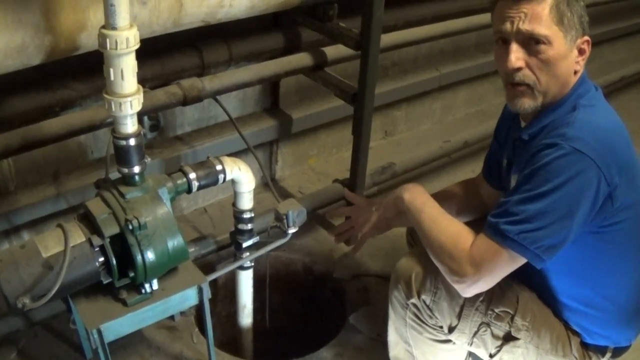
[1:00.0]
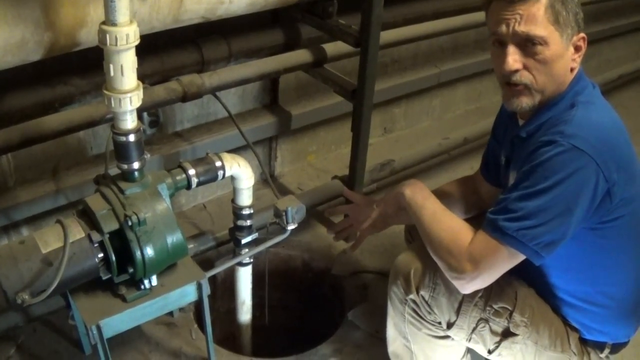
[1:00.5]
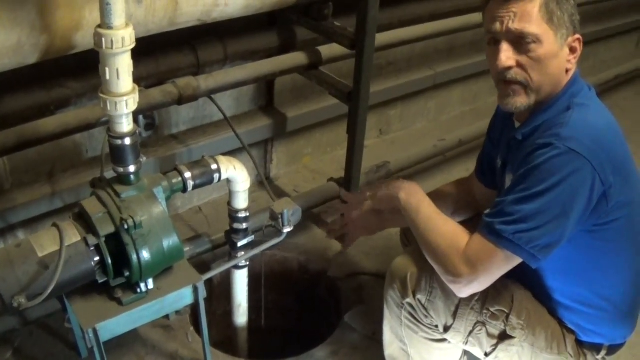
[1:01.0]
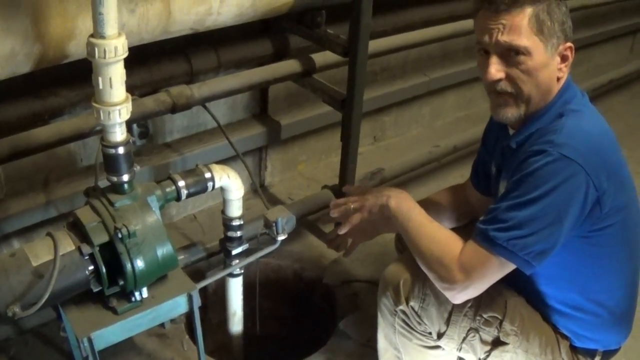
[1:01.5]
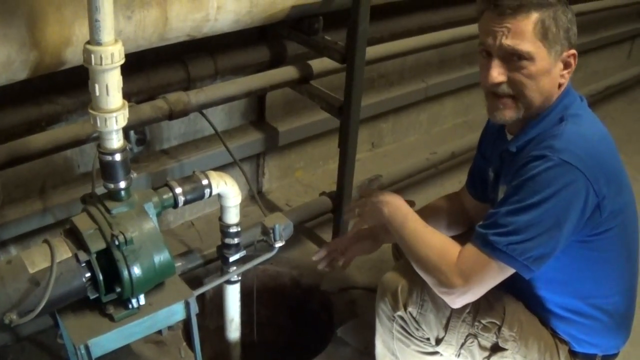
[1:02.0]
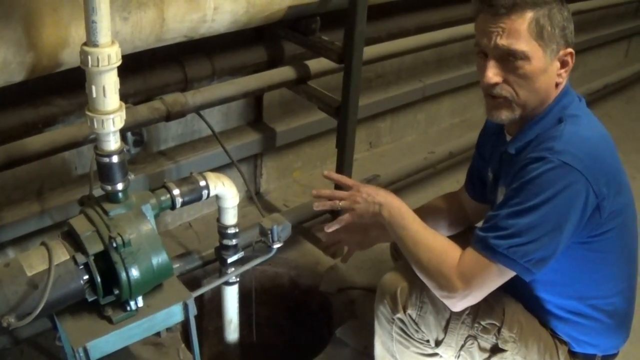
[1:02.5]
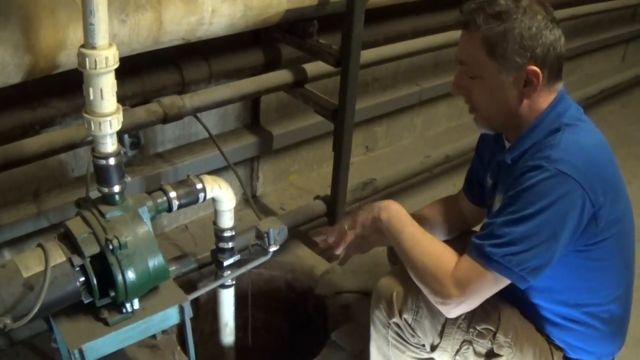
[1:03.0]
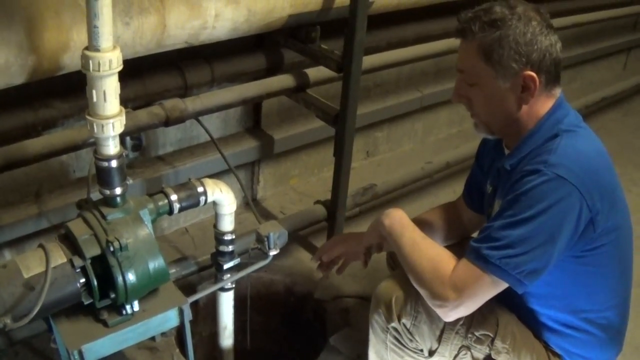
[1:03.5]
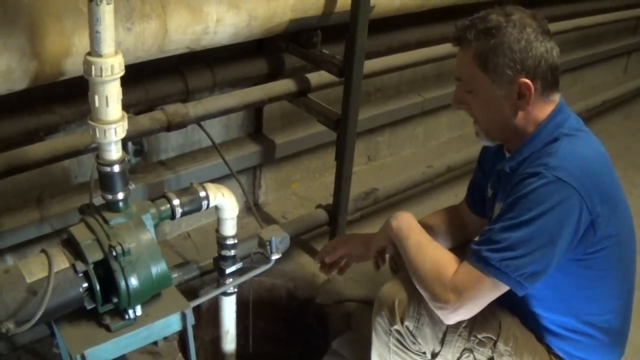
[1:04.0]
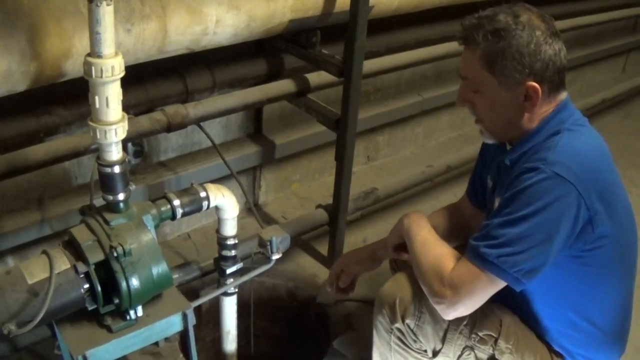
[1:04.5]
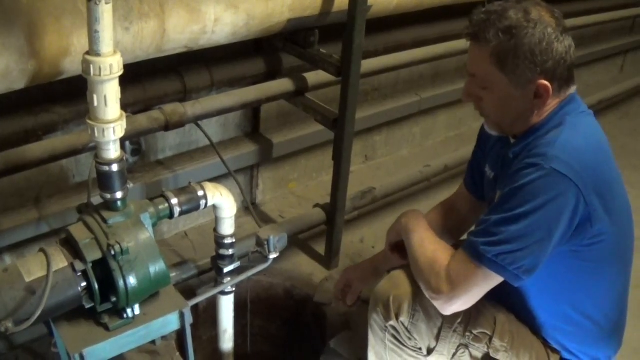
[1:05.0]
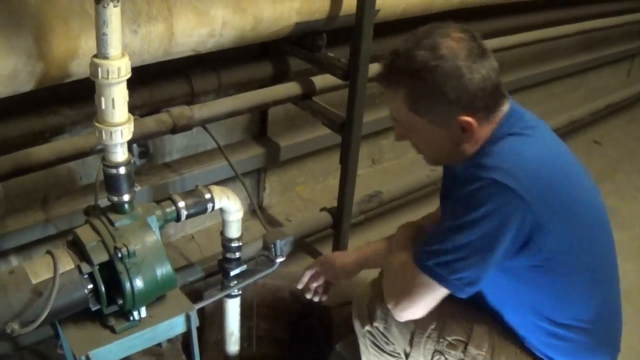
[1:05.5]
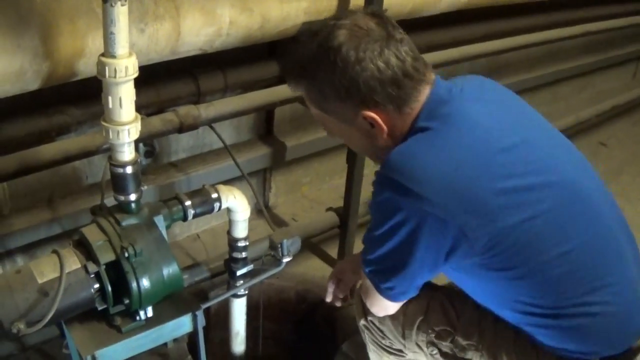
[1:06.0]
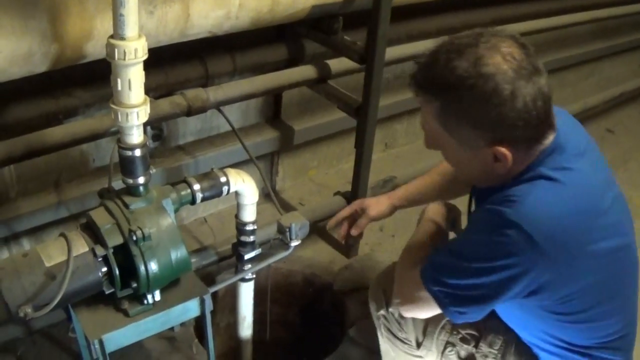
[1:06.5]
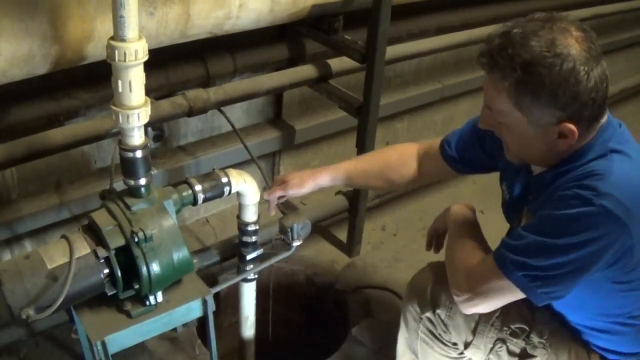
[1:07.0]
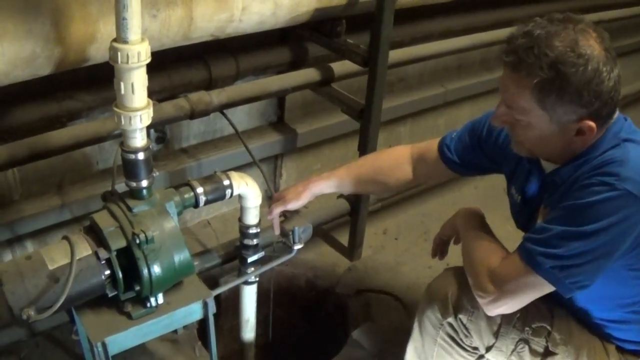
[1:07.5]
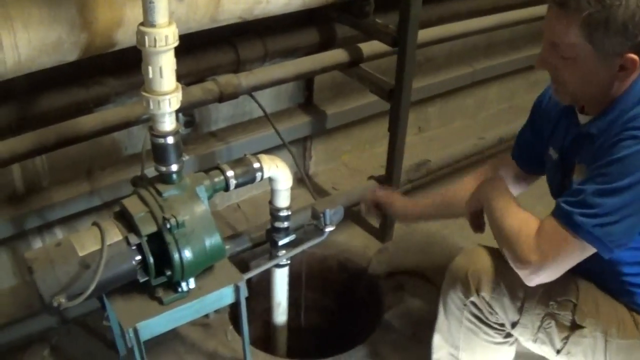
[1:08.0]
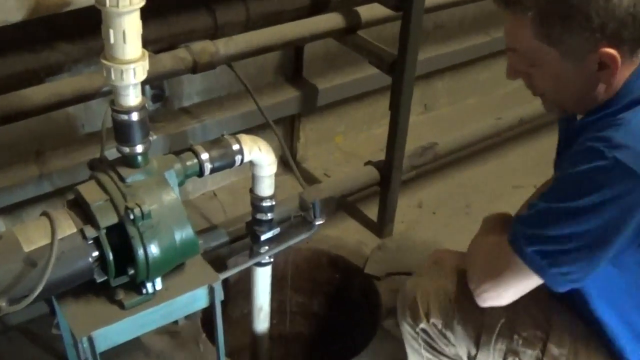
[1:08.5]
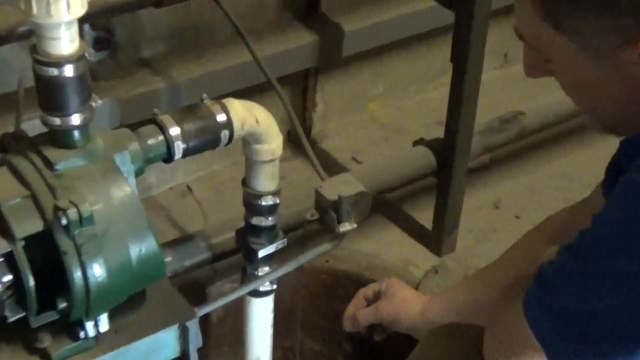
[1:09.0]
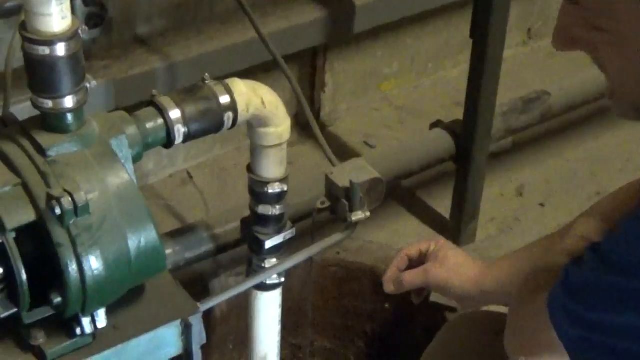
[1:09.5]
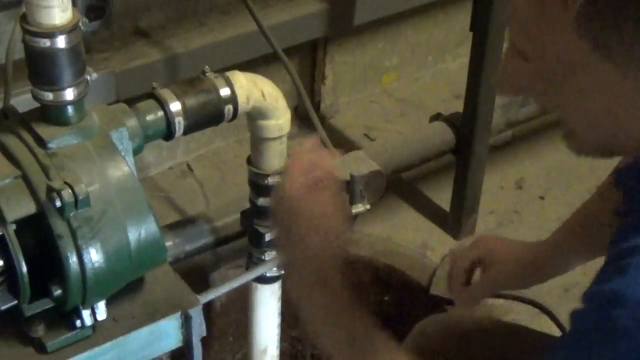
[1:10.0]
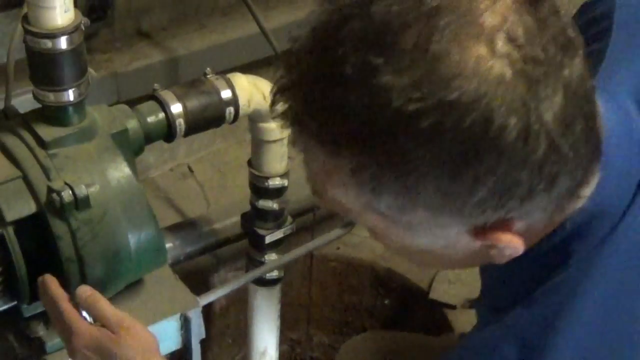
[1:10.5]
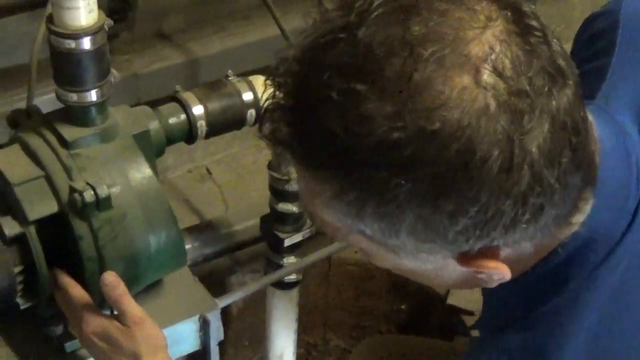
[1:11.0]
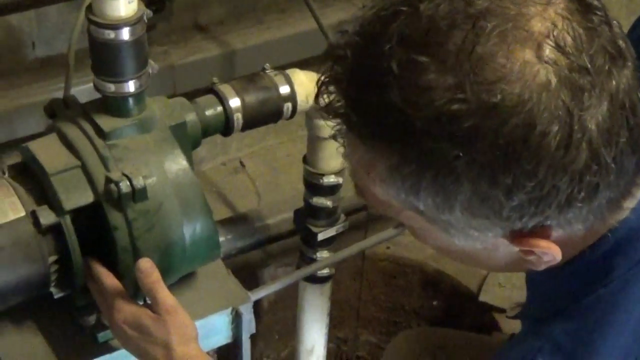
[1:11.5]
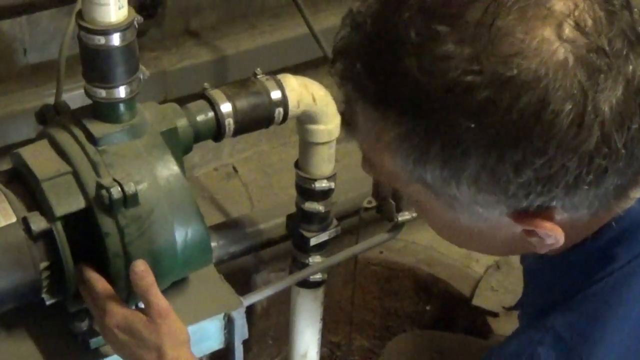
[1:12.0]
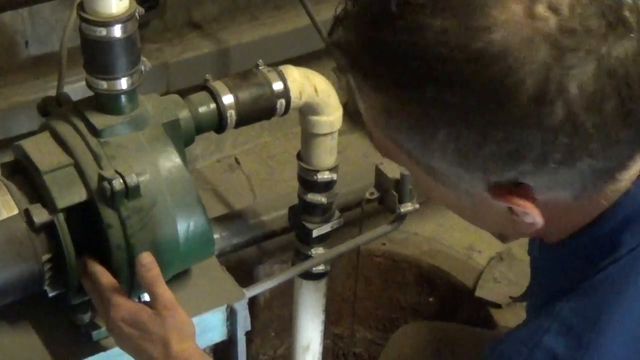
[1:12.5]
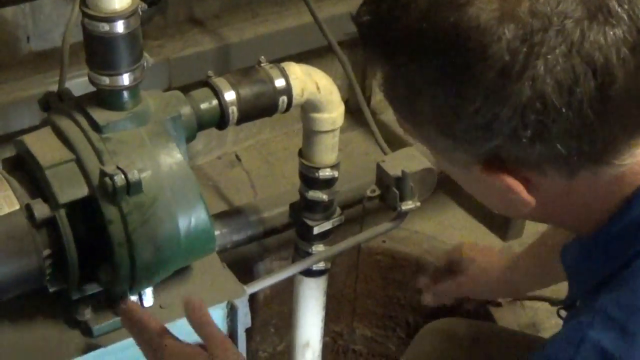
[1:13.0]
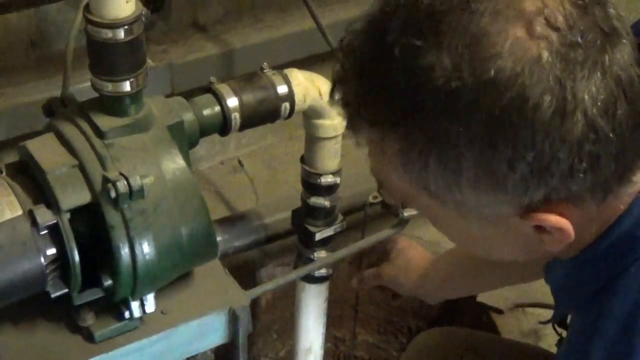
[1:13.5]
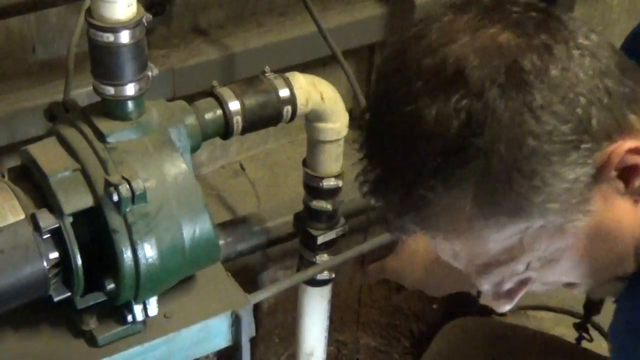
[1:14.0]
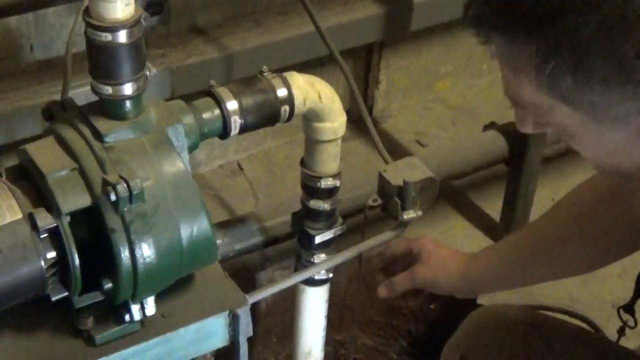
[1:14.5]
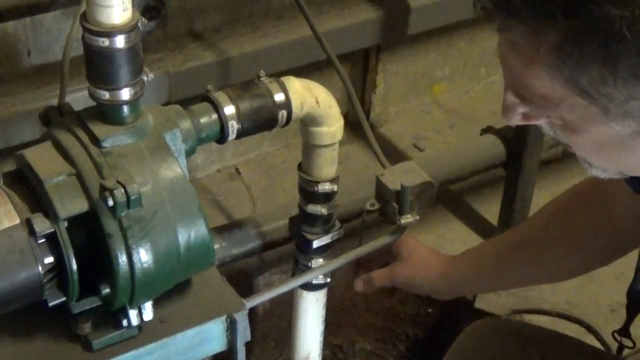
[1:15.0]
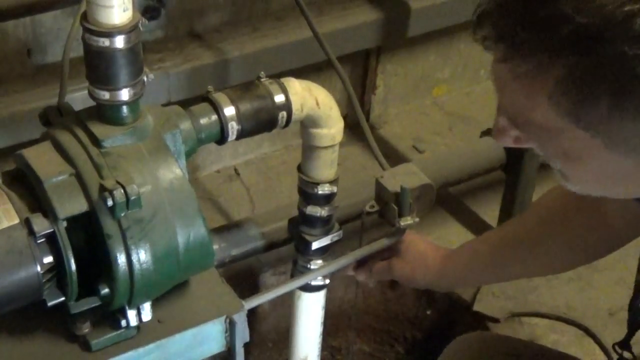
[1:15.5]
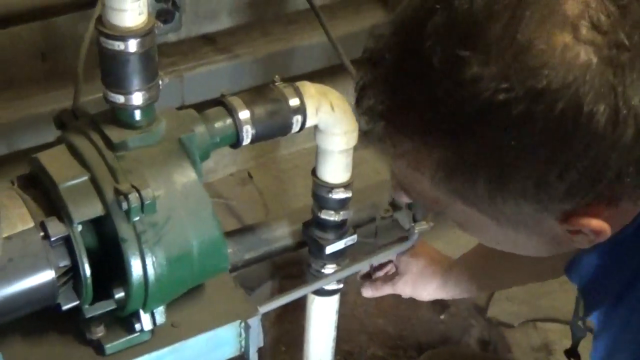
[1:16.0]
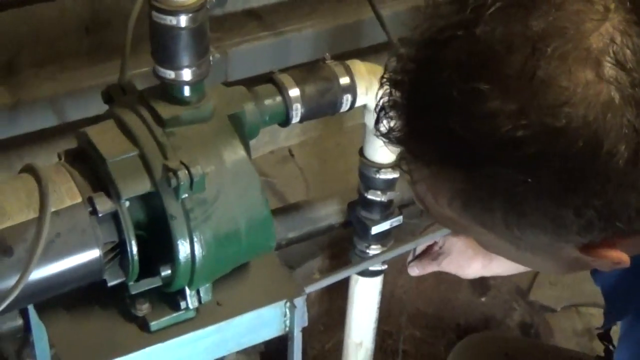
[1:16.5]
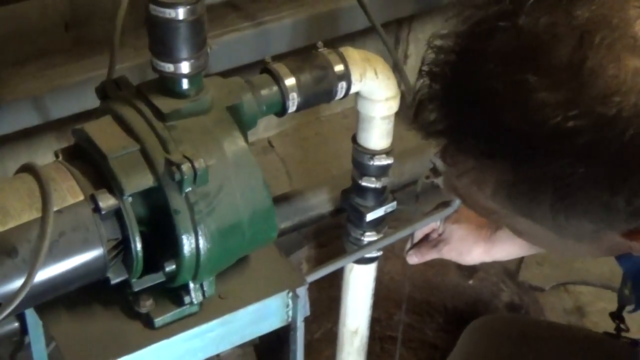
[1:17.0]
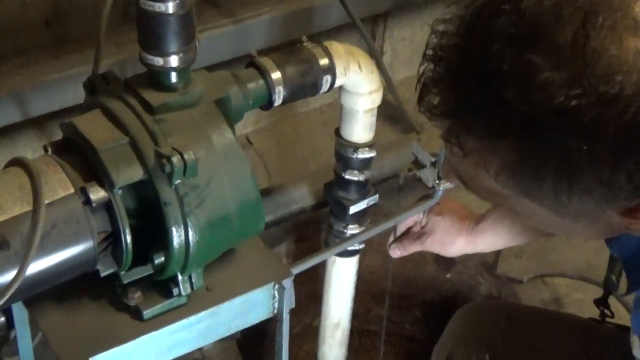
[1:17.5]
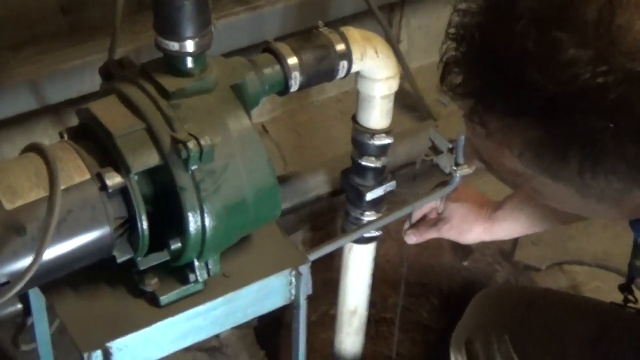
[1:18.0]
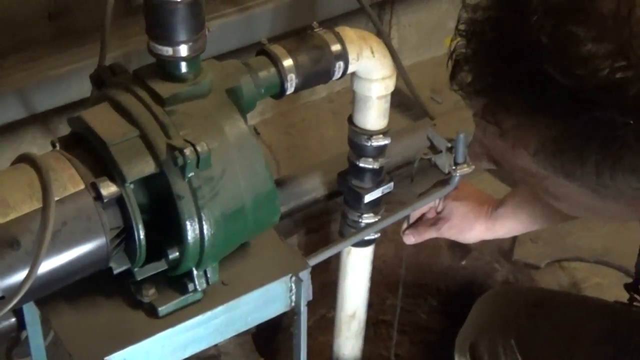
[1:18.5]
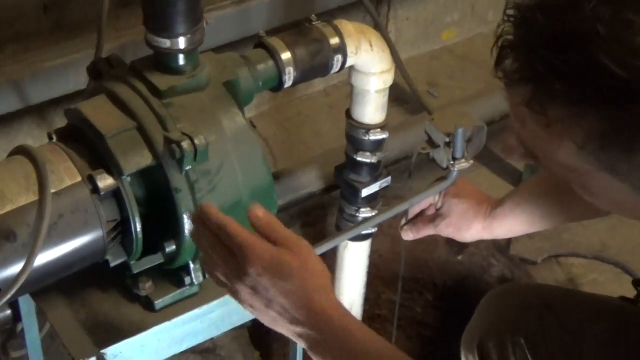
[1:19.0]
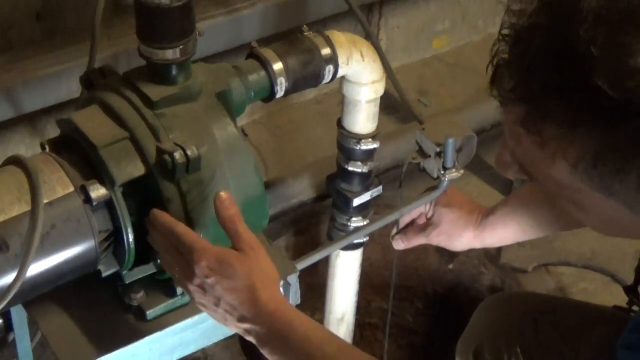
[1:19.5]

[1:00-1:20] The man wears the blue t-shirt, the badge still hanging at his neck, and khaki pants; he has a little beard. He is still squatting, with the pump's motor, the white pipes and the hole in view. Explaining something, he looks at the camera and points at the hole with both hands, all his fingers wide open. He then touches the connector joining the pipe coming from the hole to the pipe coming from the pump or motor. The camera zooms in, and he holds something inside the motor of the pump, placing his fingers there while light shines on it, as if he is checking something. Still squatting, he is surrounded by small pipes lying on the ground, others on the wall, and others suspended in the air. The main gadget, the pump or pipe, is made of green material and is possibly a motor; its front part is made of a silver-like material.